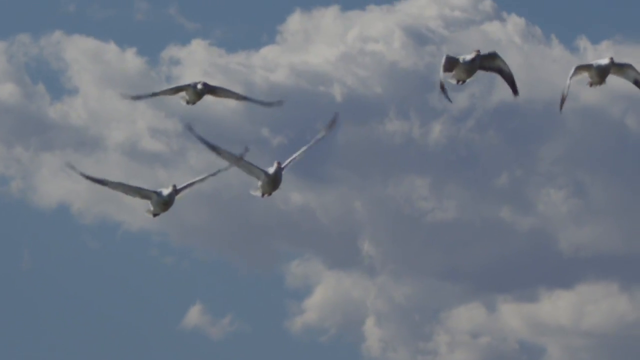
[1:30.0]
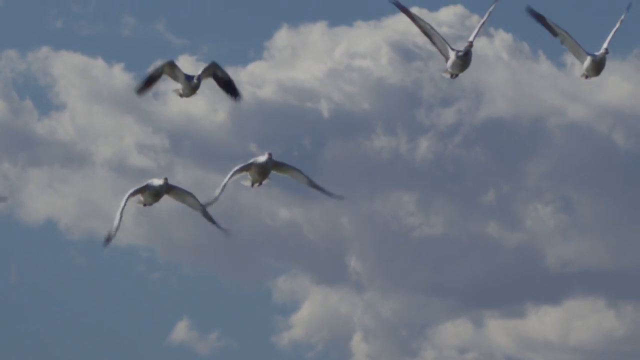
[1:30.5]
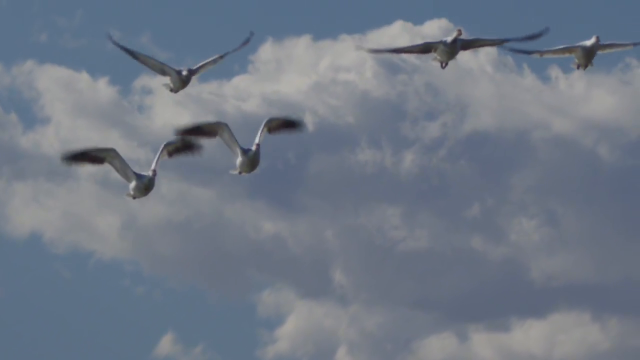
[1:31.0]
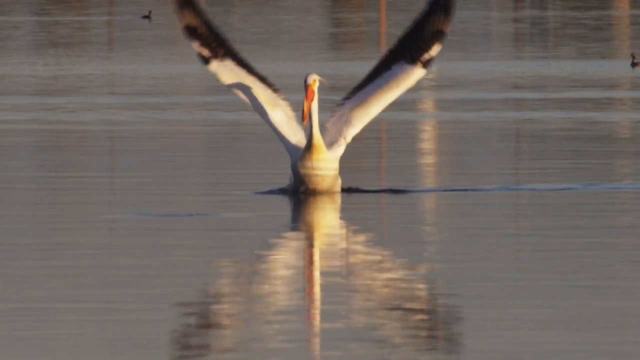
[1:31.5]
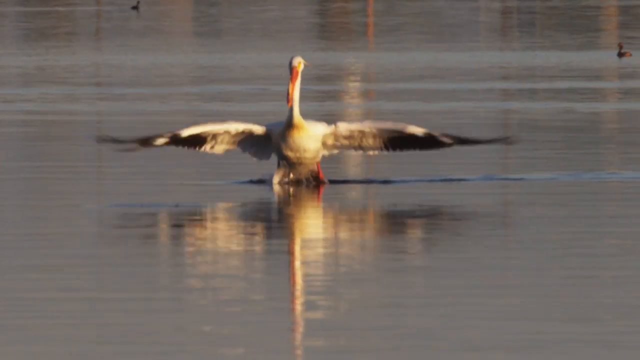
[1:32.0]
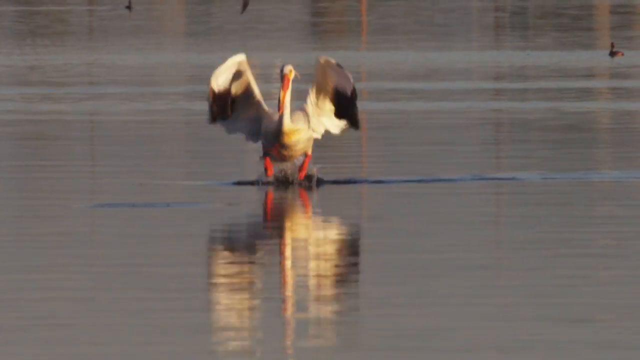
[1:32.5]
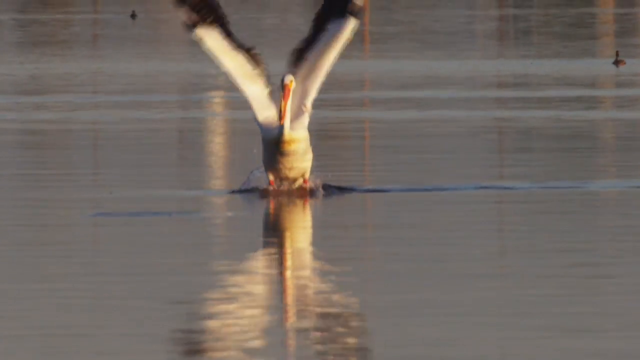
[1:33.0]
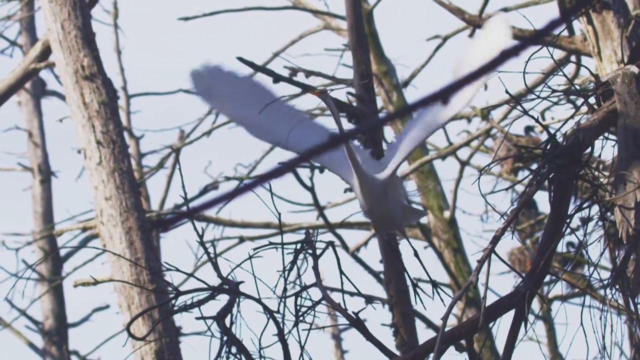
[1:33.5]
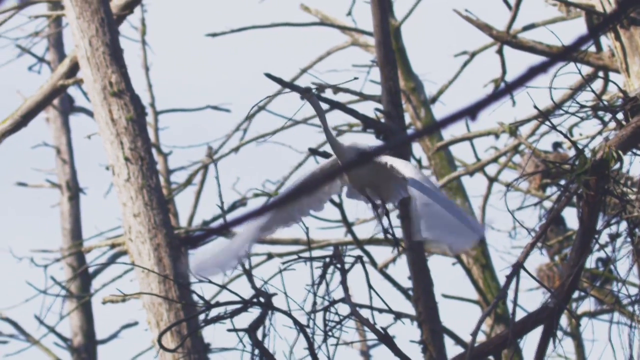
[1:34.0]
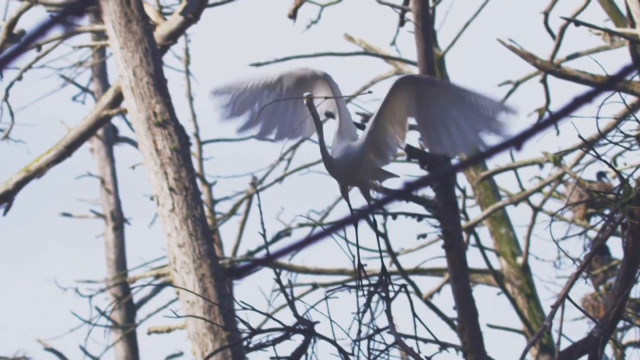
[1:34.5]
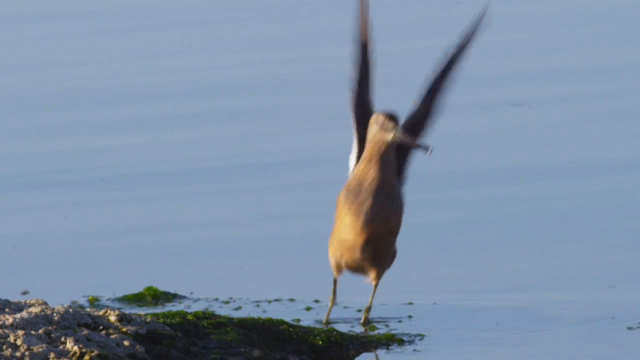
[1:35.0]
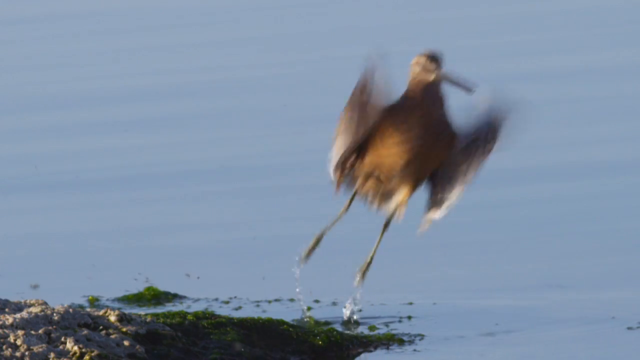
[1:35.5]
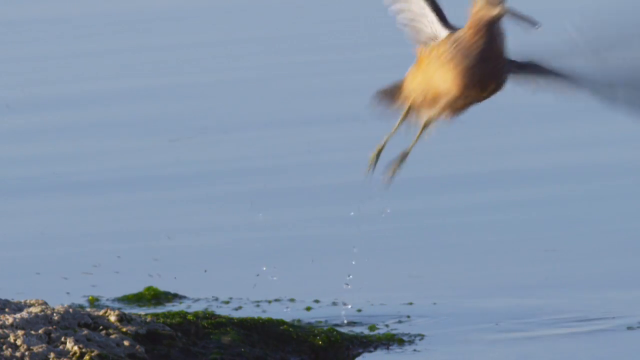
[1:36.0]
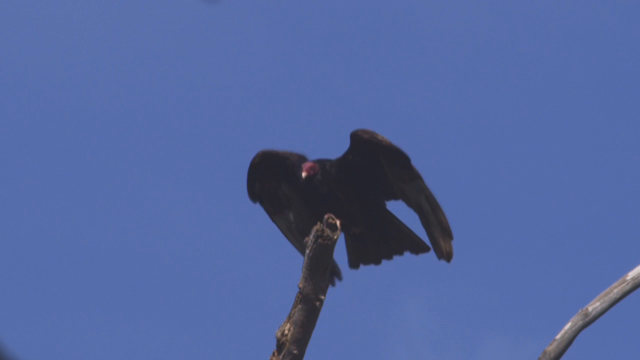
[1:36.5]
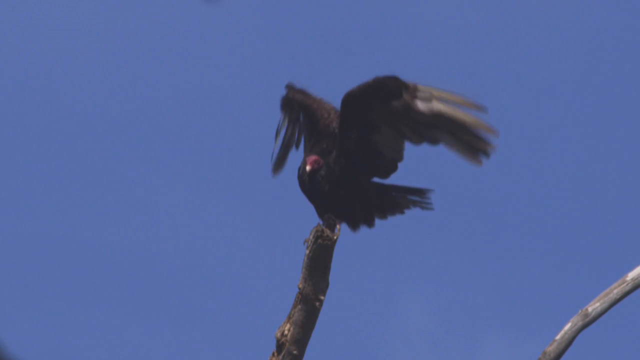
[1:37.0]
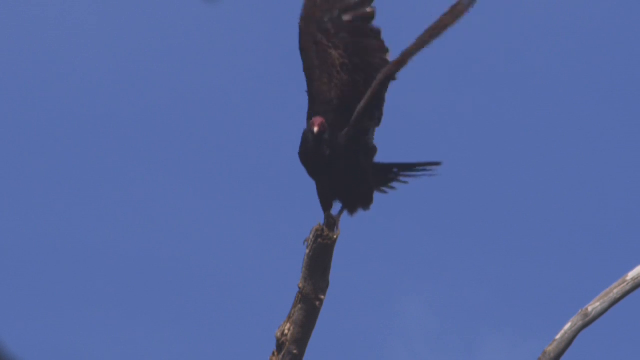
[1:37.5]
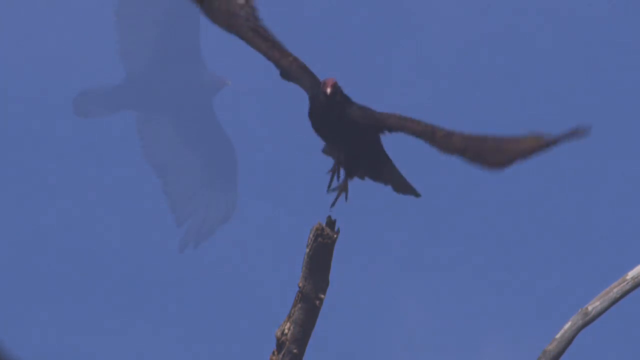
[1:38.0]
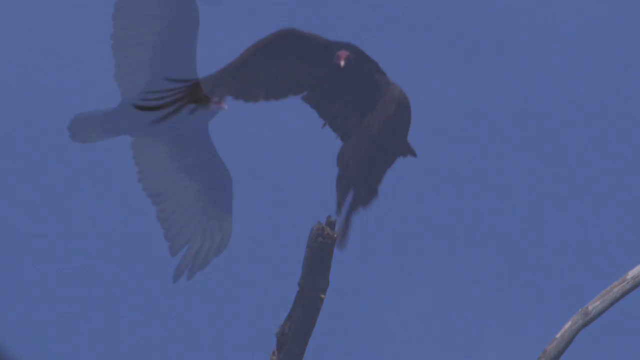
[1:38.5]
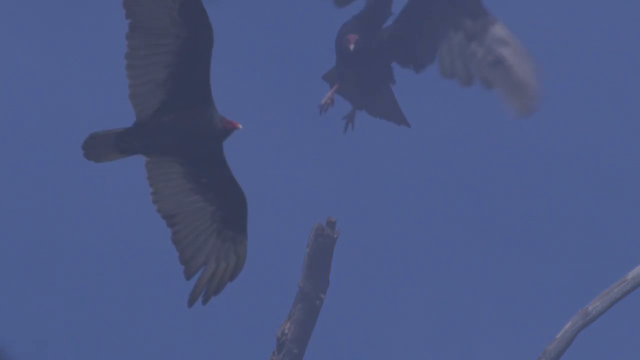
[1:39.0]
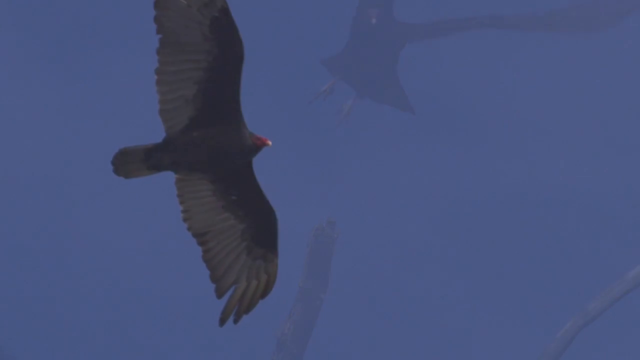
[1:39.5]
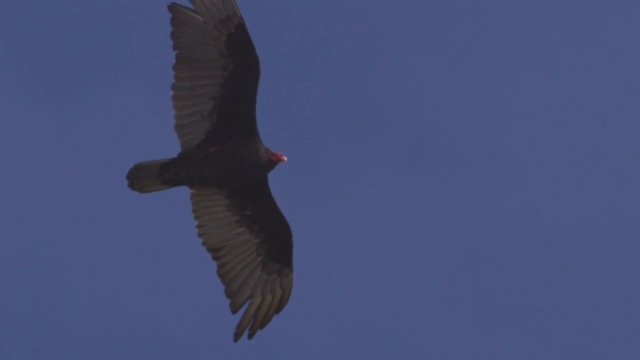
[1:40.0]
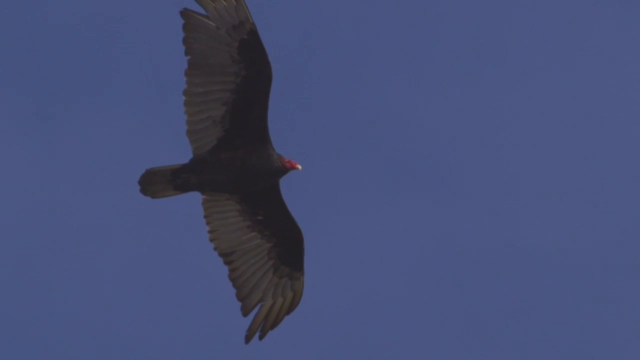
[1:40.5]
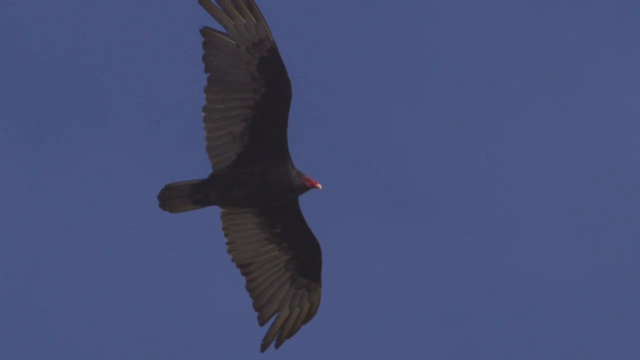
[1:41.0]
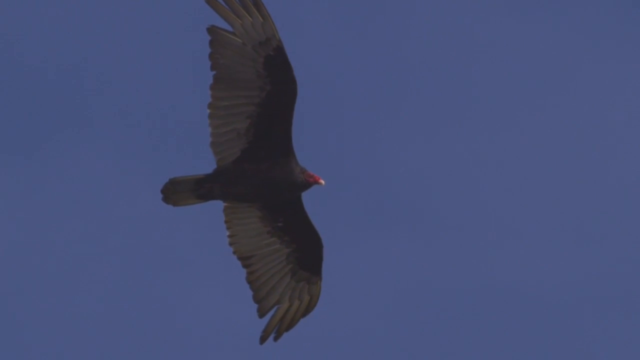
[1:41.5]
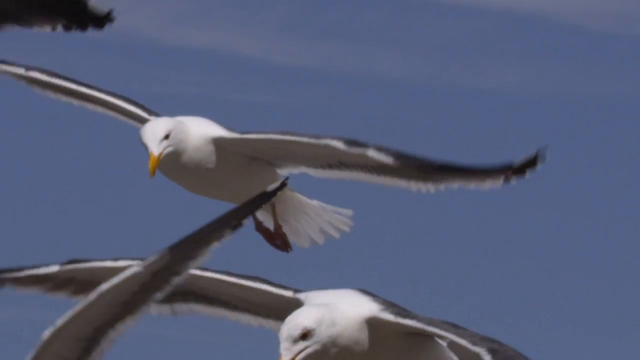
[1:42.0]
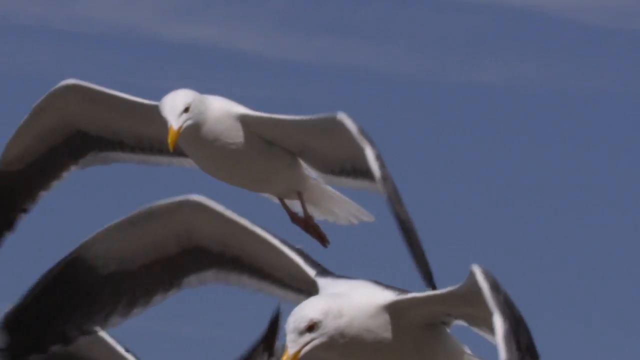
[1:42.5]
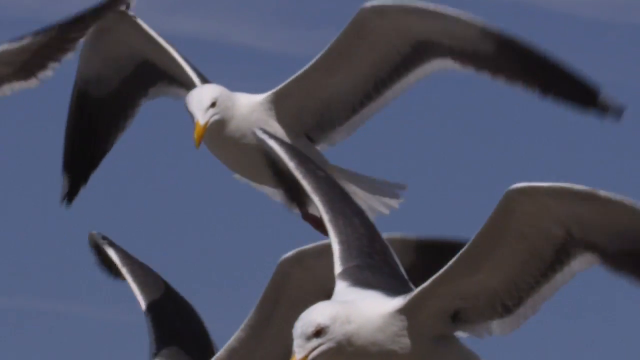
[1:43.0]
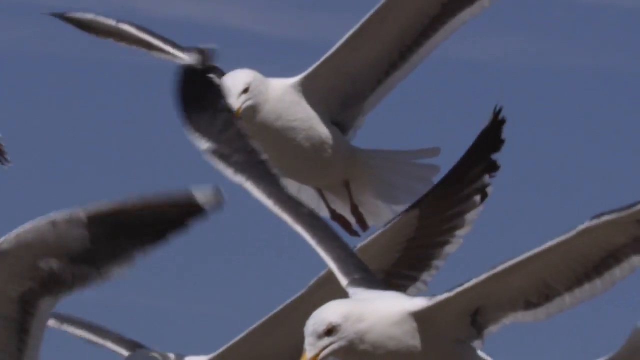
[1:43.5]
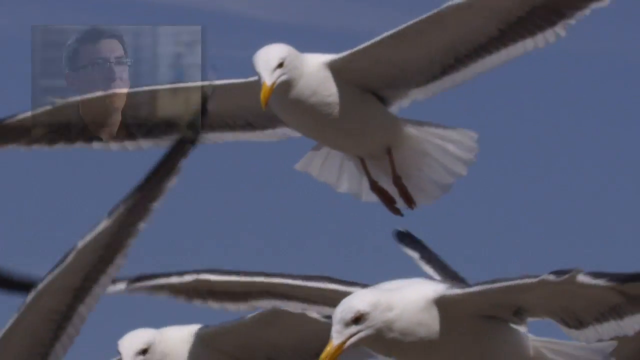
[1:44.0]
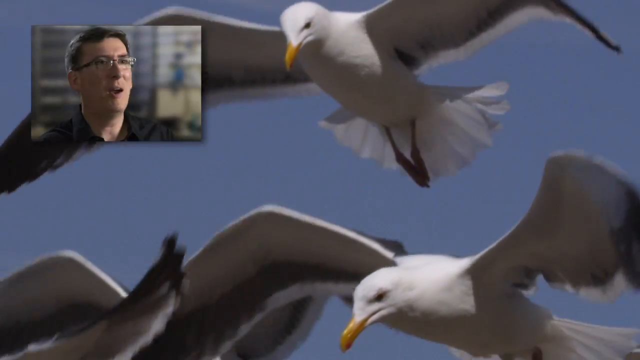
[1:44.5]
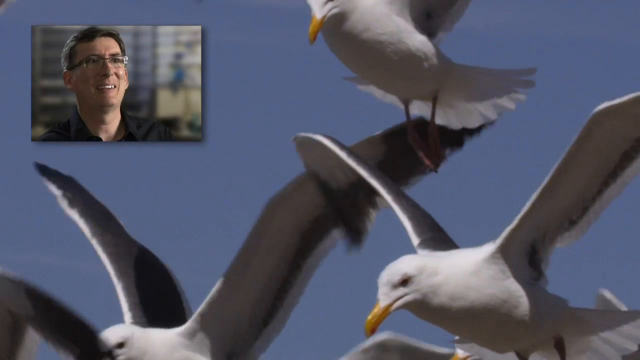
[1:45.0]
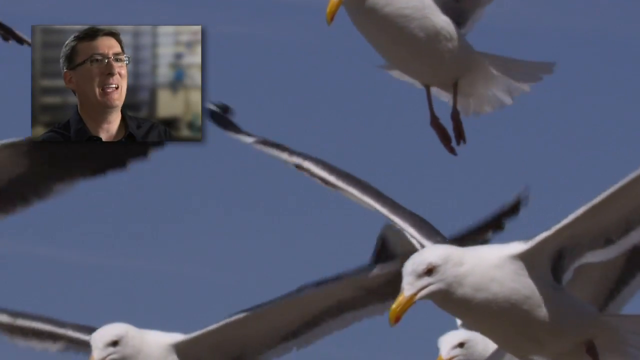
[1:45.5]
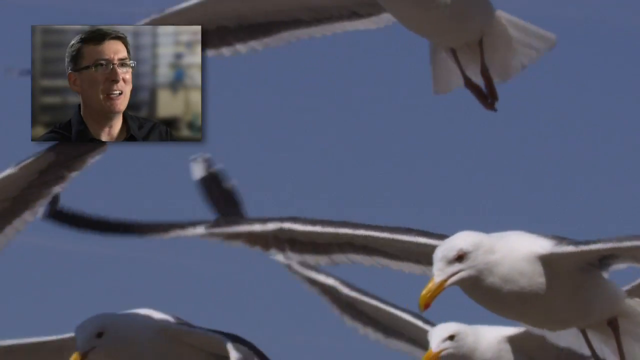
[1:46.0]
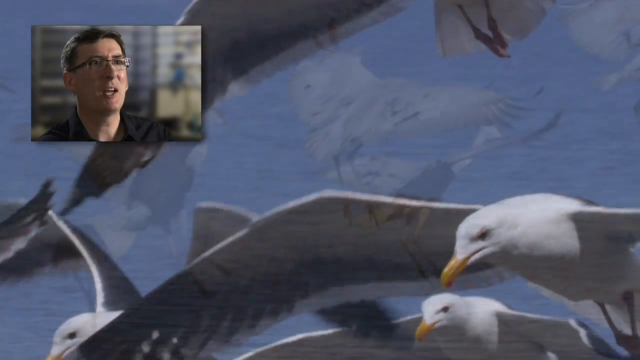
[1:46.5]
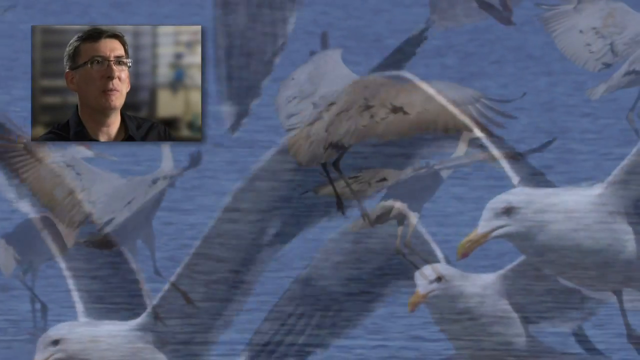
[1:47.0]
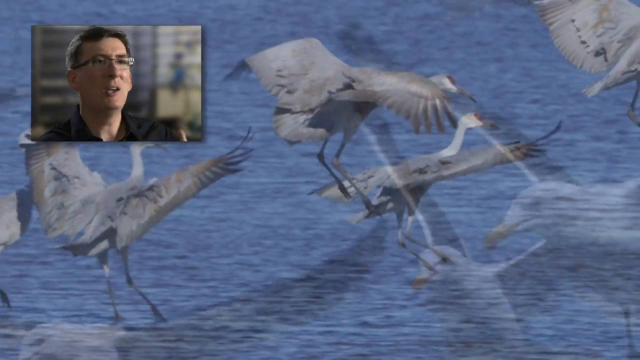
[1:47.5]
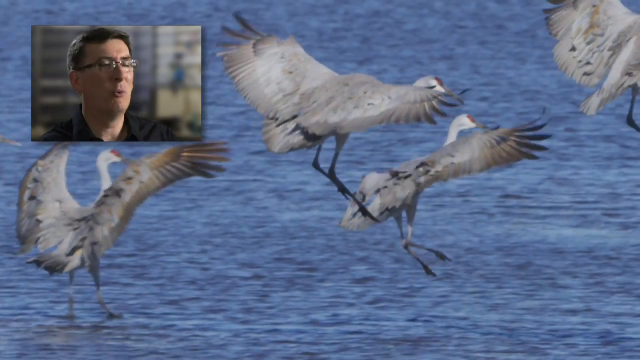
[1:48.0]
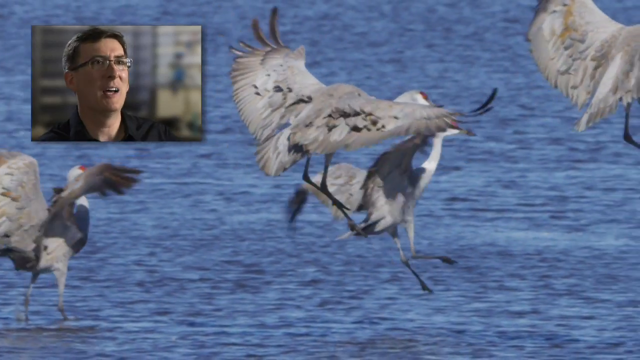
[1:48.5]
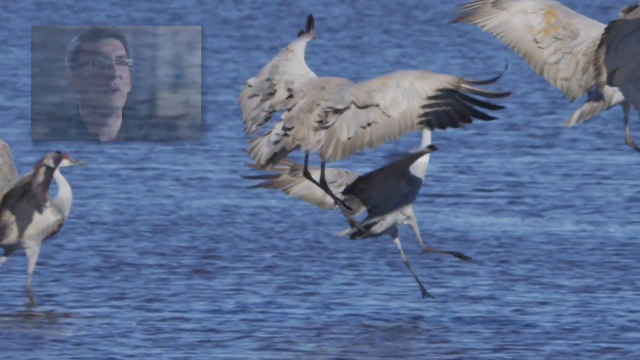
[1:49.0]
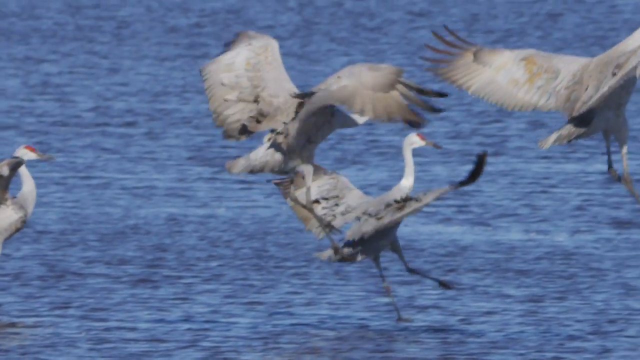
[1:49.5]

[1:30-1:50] What looks like a pelican wades in the water. It is white with black tips on its wings and a big orange beak, the visible parts of its feet are orange too, and its reflection shows in the water in front of it. Next, some sort of crane, it looks like, with a very long neck and white body, flies through some trees. A brown bird, perhaps a sandpiper, flies with its legs down, with what looks like the ocean or some body of water with small islands in the background. The vulture seen earlier sits on the top of a limb with its wings up; its head is red and its wings are dark gray and black, and it takes off to fly. The video returns to the seagulls, and in the top left corner a man, presumably talking about them, appears; he wears glasses and a black shirt and has dark brown hair. Behind him is a blurred picture that cannot be made out. He seems very fascinated by the birds.